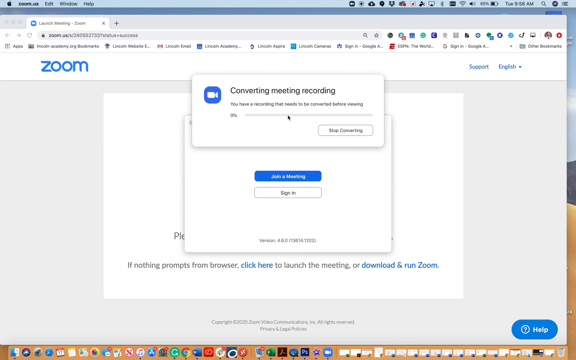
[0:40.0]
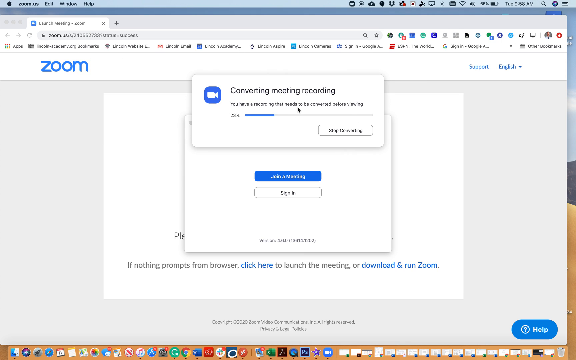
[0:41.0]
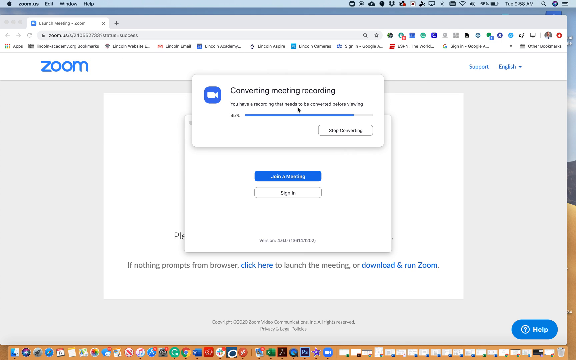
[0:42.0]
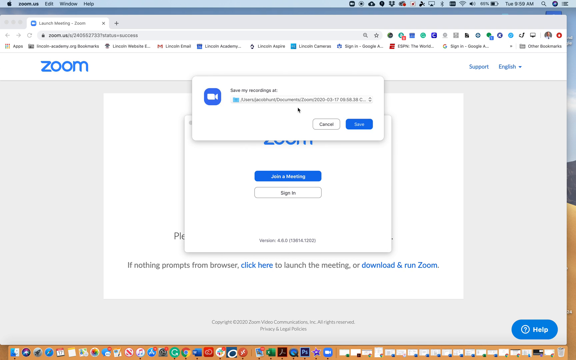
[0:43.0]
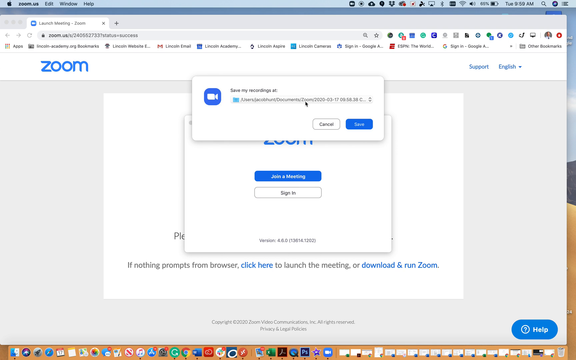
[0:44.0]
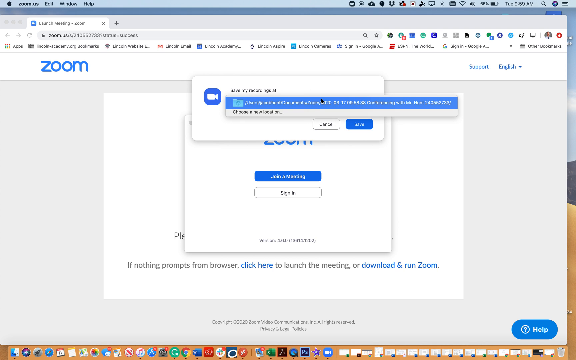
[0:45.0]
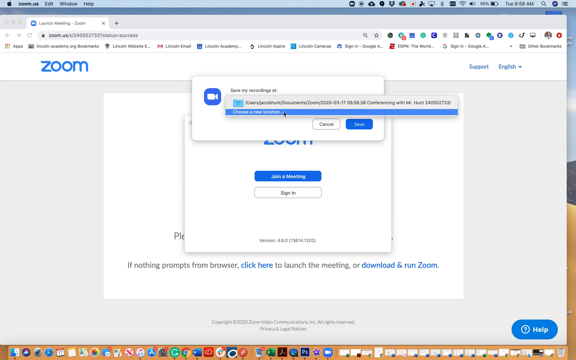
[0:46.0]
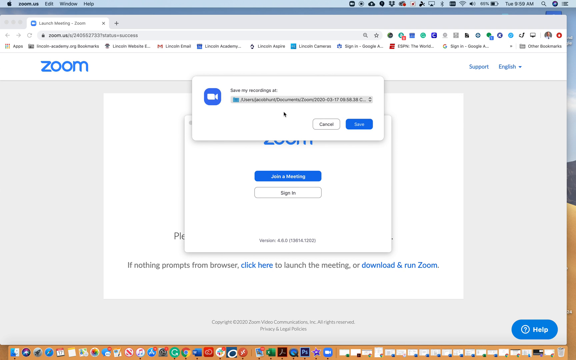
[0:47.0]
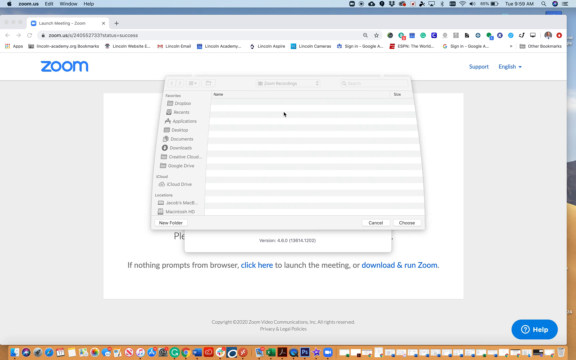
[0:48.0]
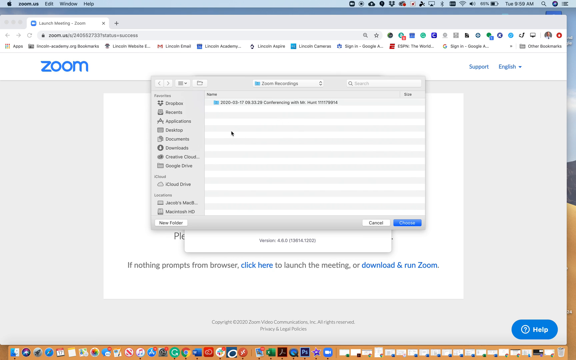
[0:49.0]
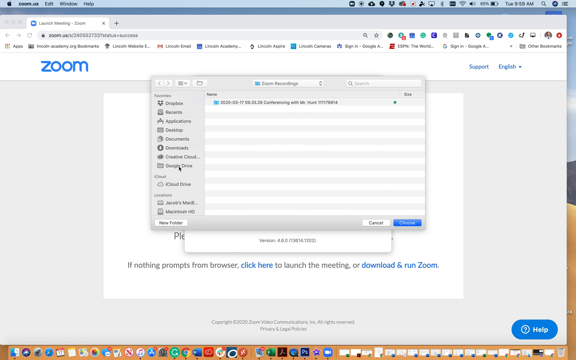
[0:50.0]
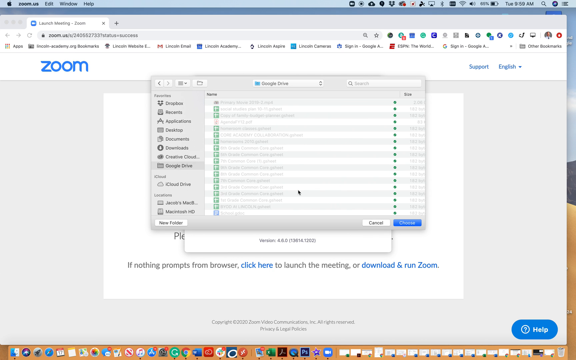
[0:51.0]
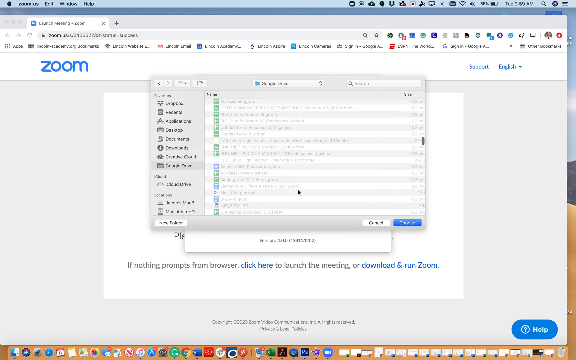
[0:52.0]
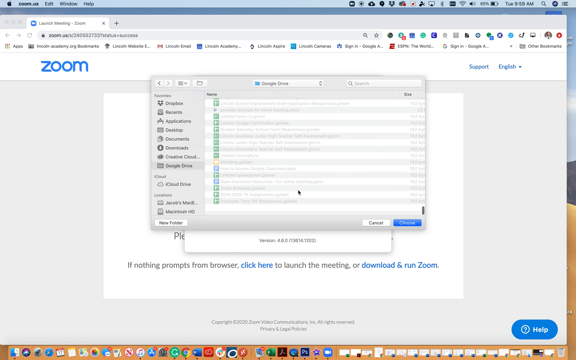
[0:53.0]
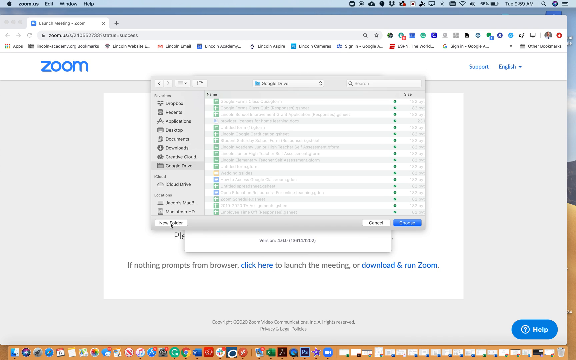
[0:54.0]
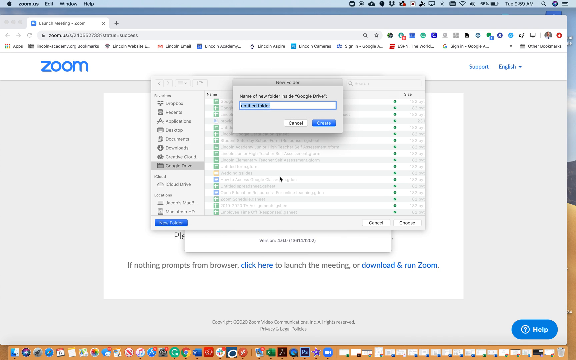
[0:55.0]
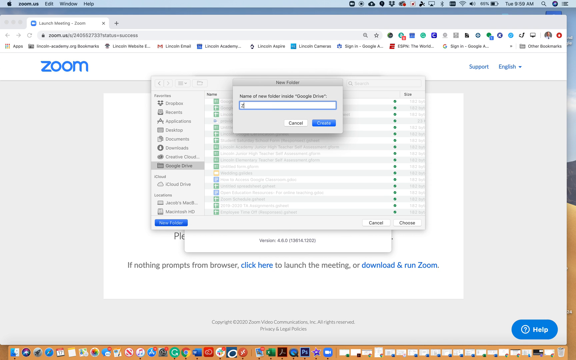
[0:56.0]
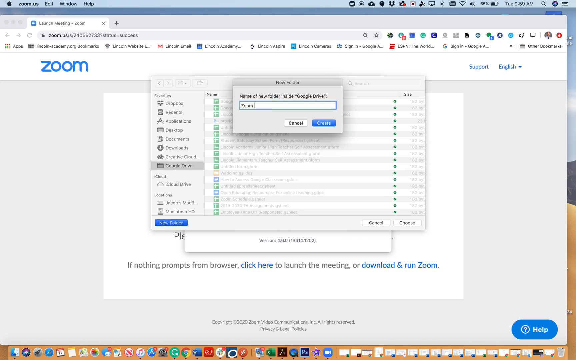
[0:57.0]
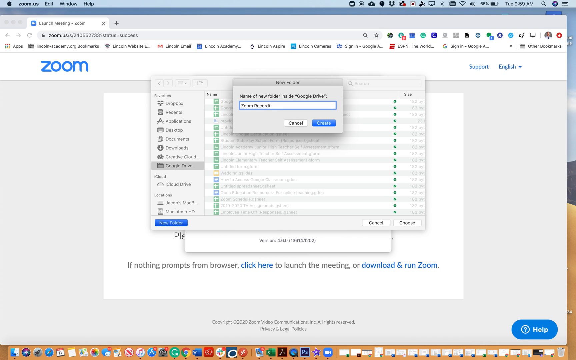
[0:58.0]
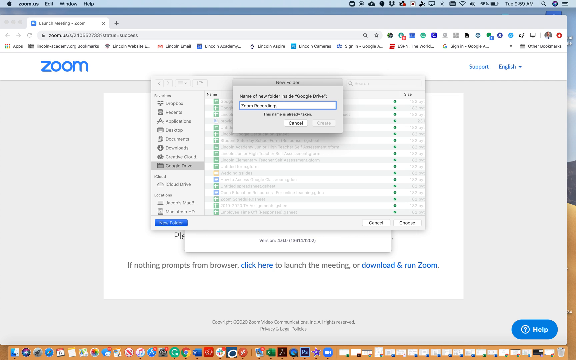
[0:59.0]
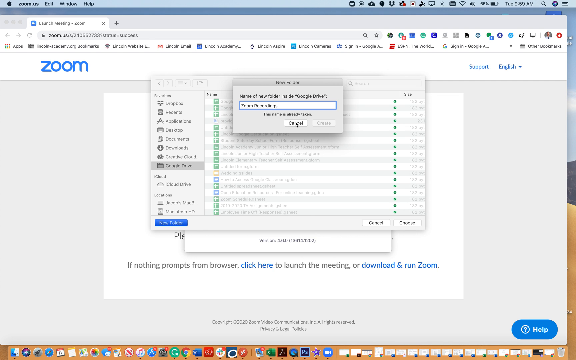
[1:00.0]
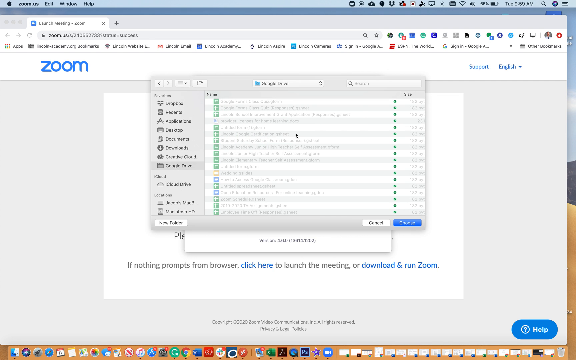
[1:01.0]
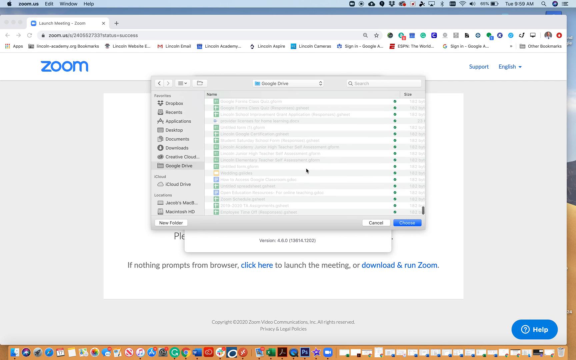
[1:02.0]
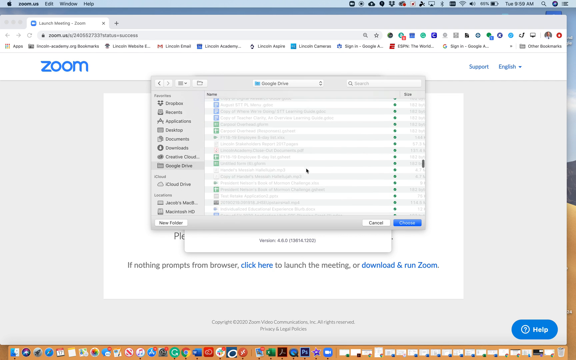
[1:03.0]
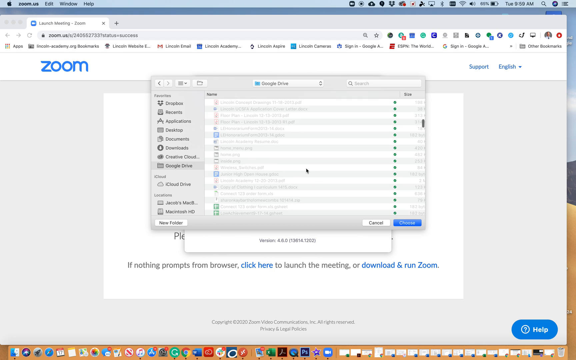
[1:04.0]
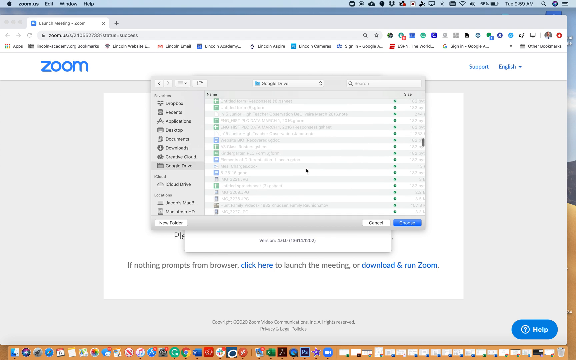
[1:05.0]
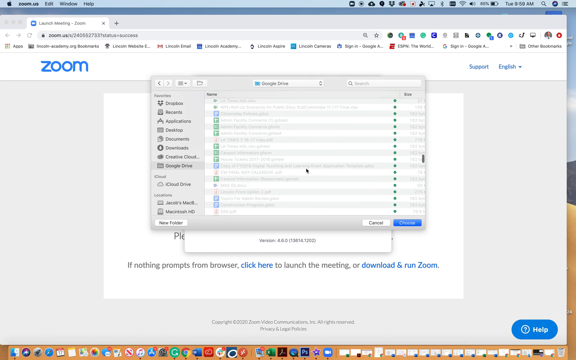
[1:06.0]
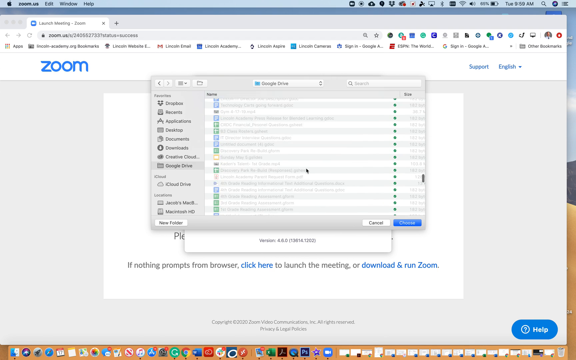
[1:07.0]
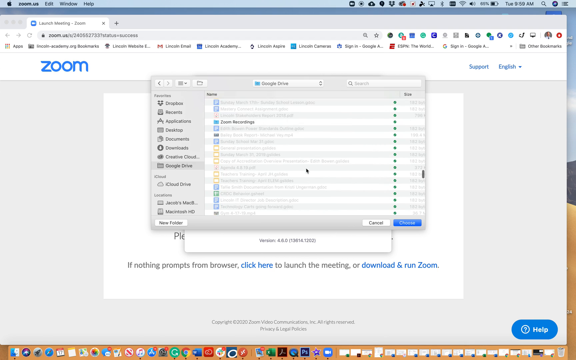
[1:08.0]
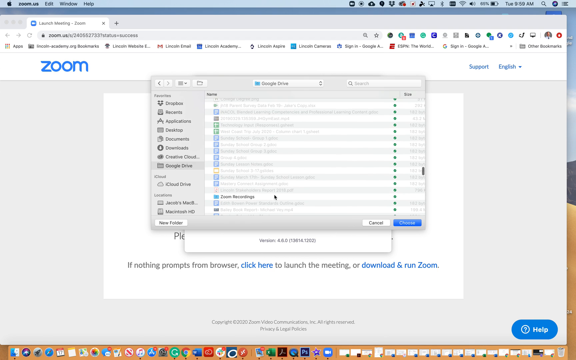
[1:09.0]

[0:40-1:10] The screen shows "converting meeting recording," with a blue square containing a white camera, a progress bar for the conversion of the Zoom meeting, and a white button with black letters reading "Stop converting." The conversion reaches 100 percent. A new box appears with the same blue Zoom logo with a white camera and black letters reading "save my recording at." There is a light blue folder with a blurry folder name and an up and a down arrow, a white box with black letters reading "cancel," and to its right a blue button with white letters that says "save." The user selects the arrows to change the file location and accesses his computer hard drive. On the left side he selects Google Drive and scrolls down the Google Drive folders. To the left, he selects Name Folder, and a box pops up for the name of a new folder inside Google Drive. He types in an unidentifiable name, then selects Cancel. He continues scrolling up and down his Google Drive and selects a folder.